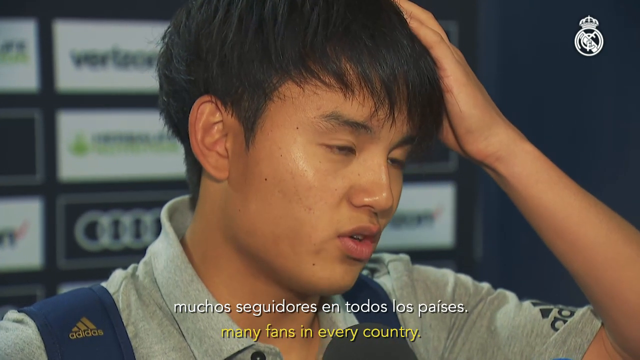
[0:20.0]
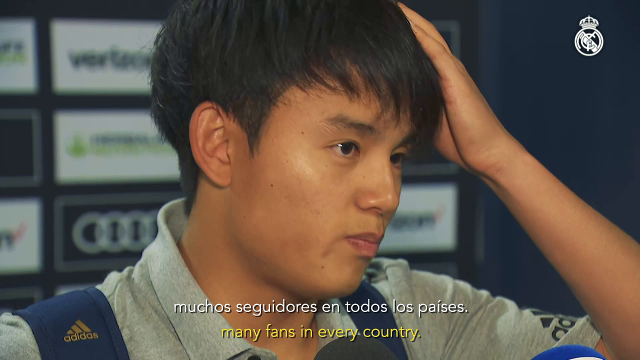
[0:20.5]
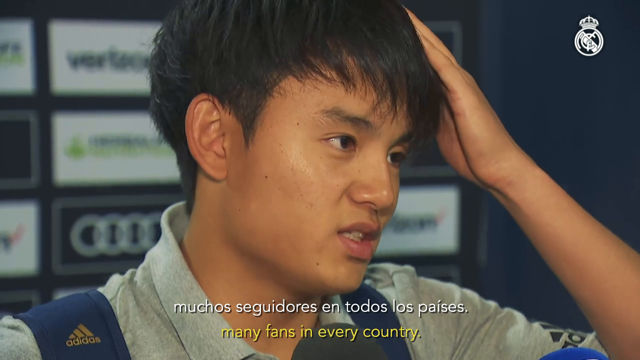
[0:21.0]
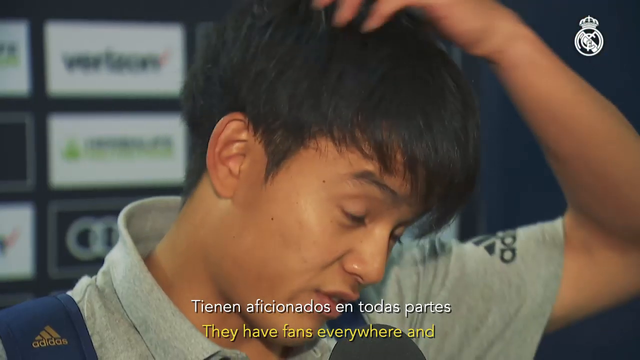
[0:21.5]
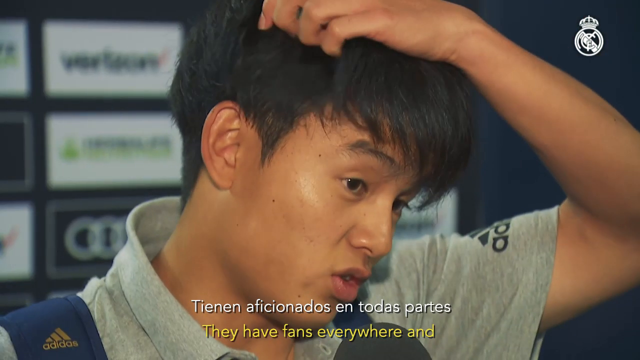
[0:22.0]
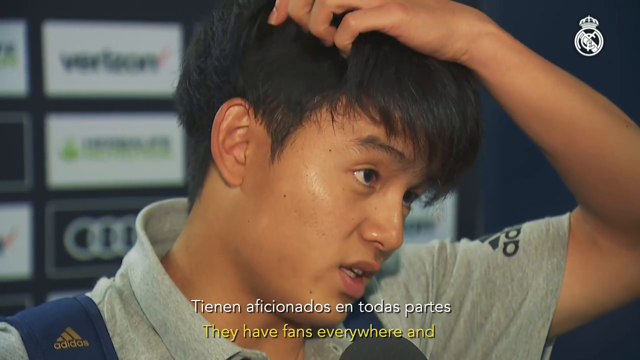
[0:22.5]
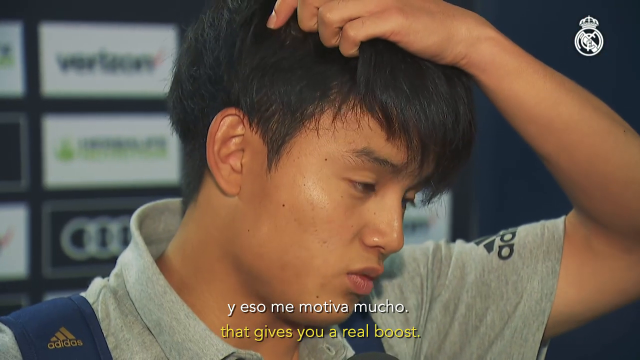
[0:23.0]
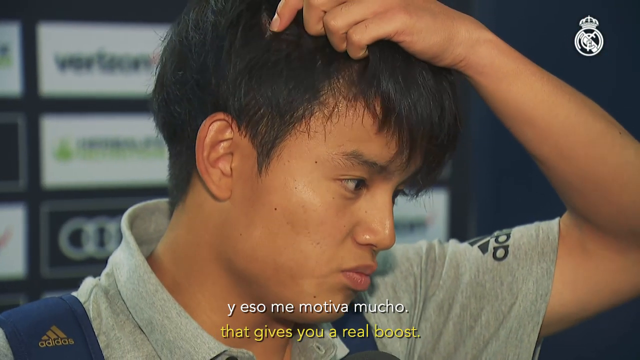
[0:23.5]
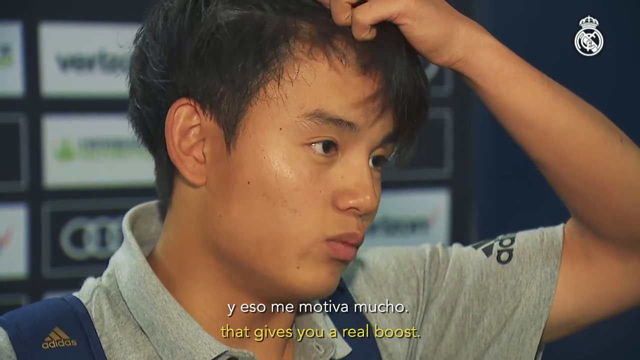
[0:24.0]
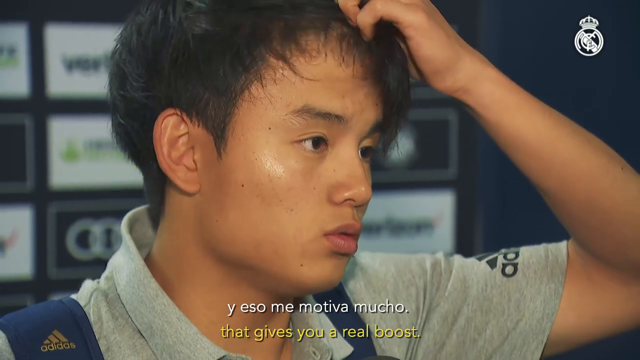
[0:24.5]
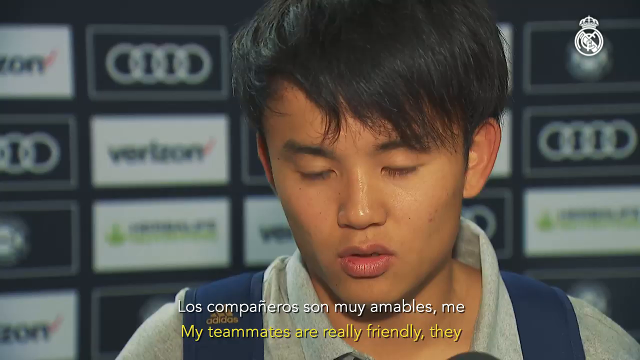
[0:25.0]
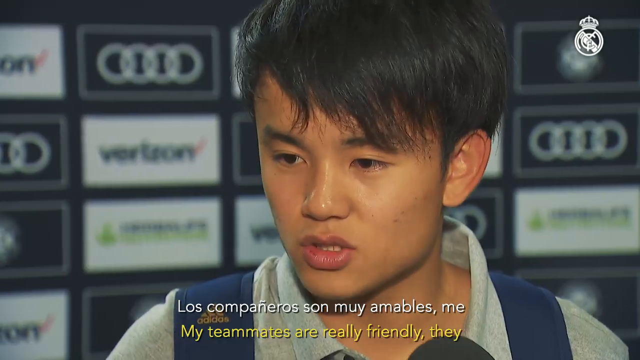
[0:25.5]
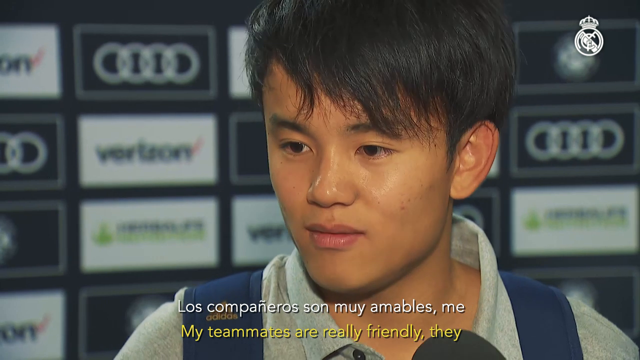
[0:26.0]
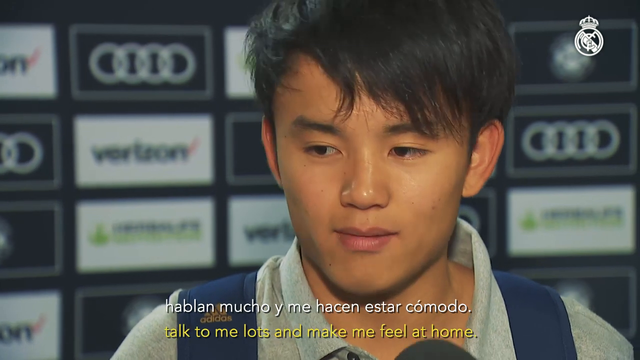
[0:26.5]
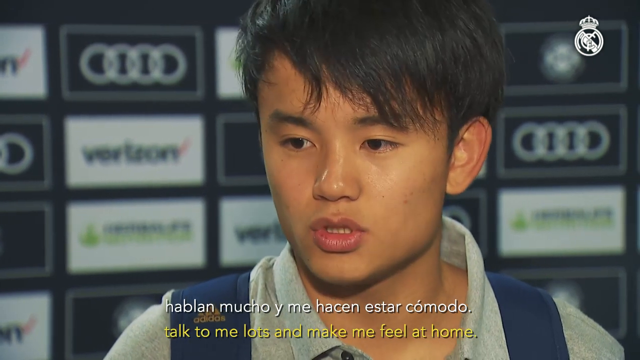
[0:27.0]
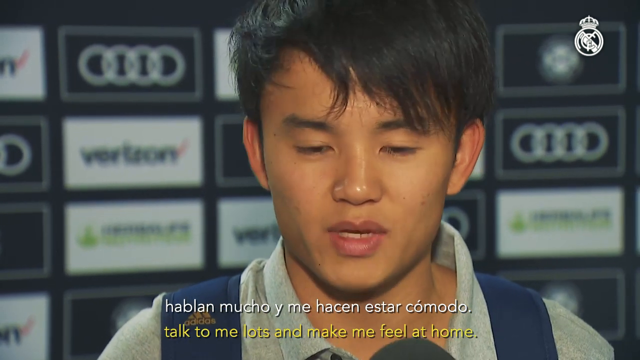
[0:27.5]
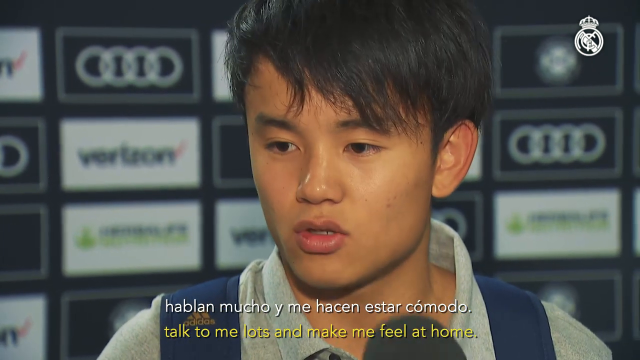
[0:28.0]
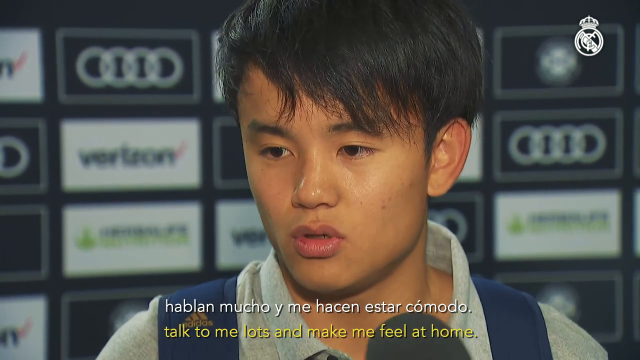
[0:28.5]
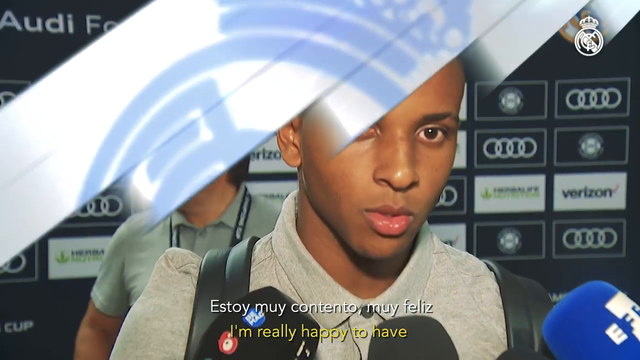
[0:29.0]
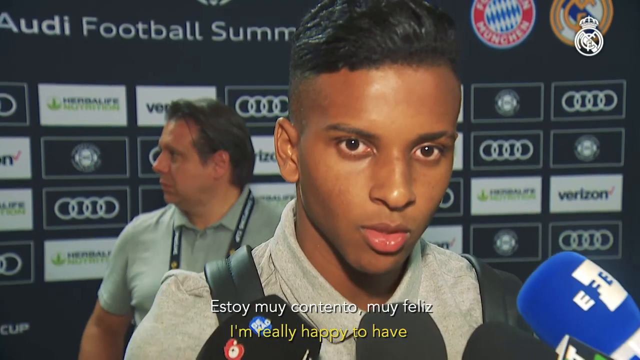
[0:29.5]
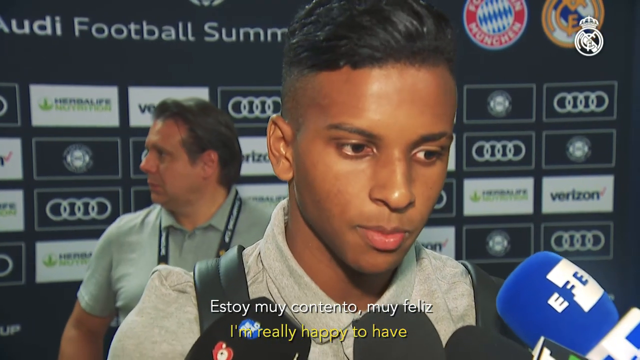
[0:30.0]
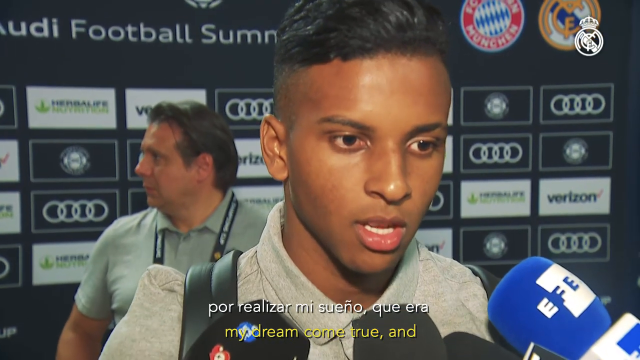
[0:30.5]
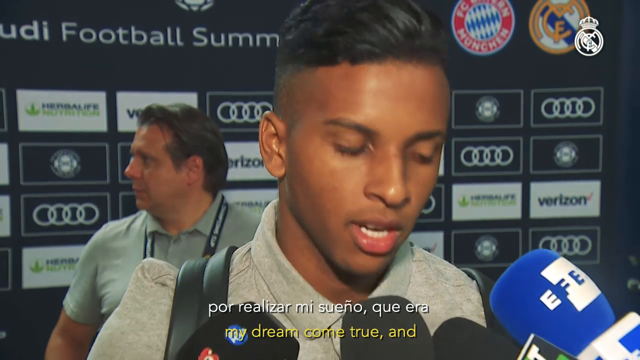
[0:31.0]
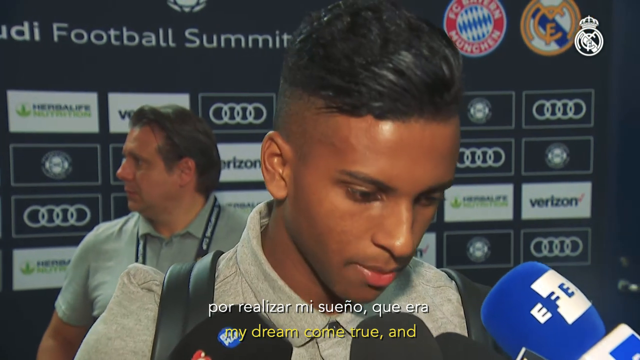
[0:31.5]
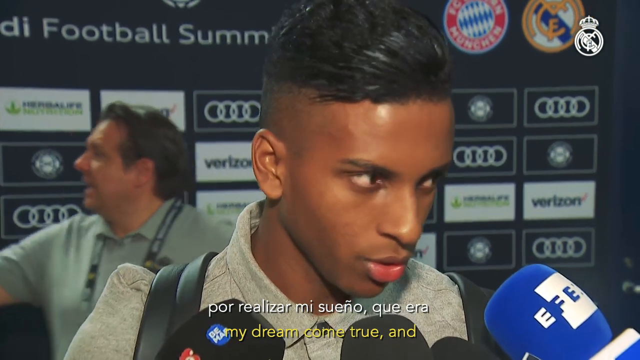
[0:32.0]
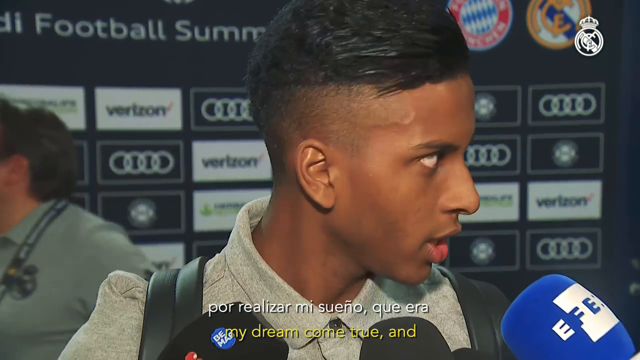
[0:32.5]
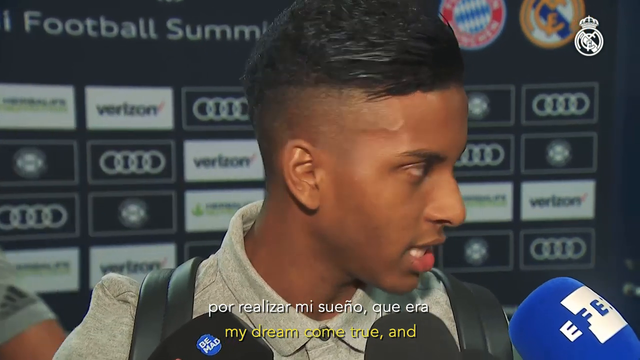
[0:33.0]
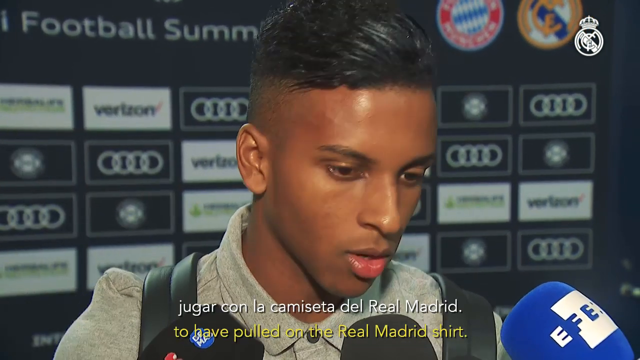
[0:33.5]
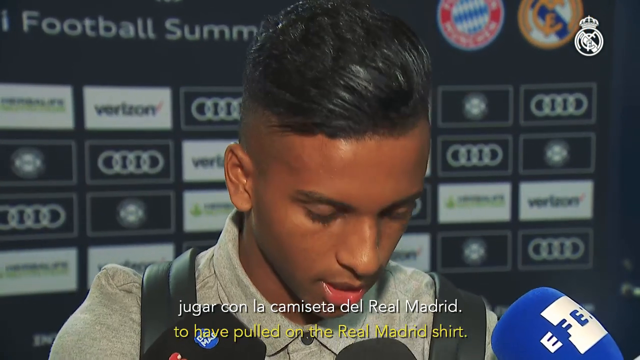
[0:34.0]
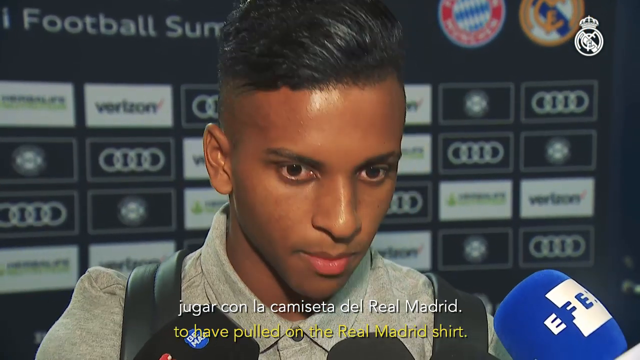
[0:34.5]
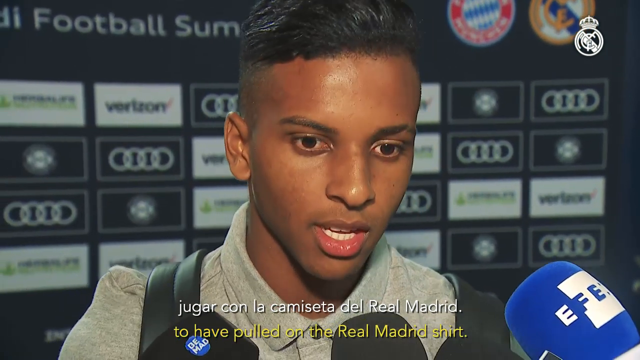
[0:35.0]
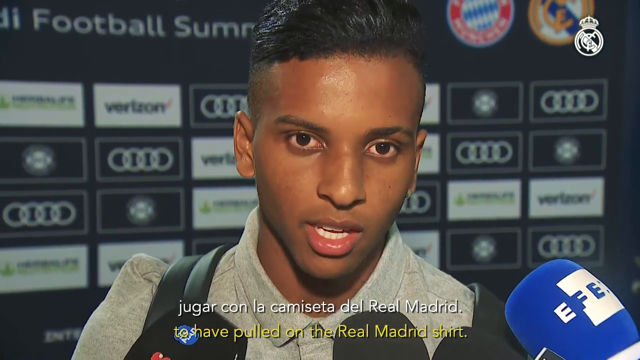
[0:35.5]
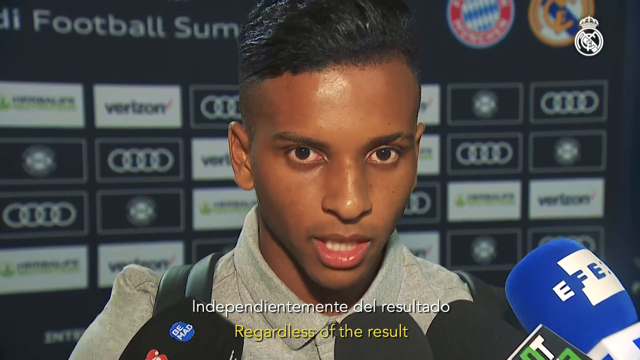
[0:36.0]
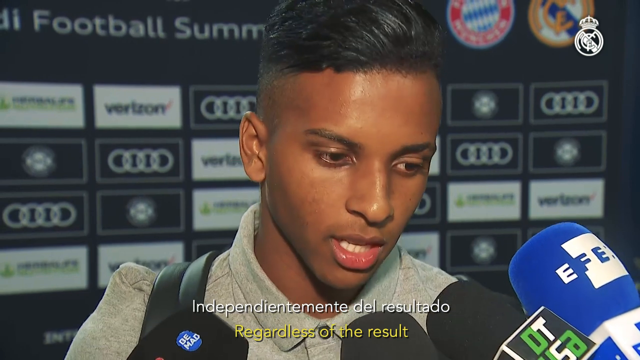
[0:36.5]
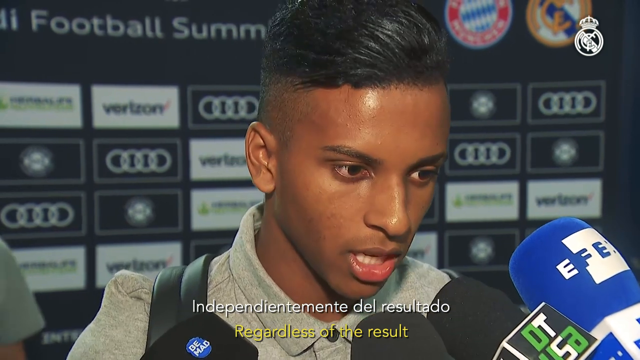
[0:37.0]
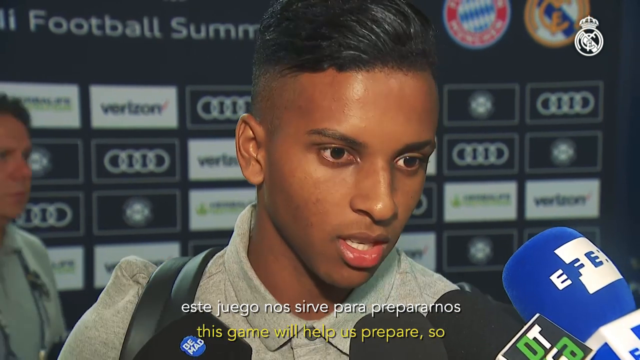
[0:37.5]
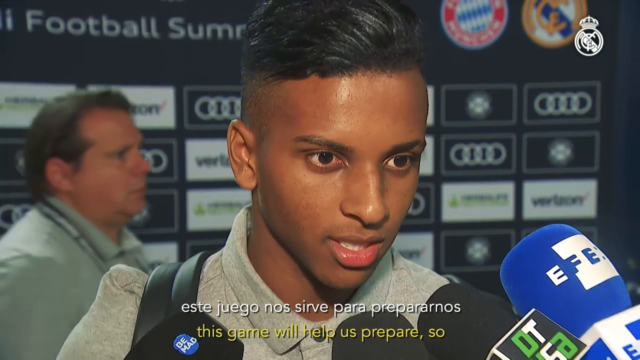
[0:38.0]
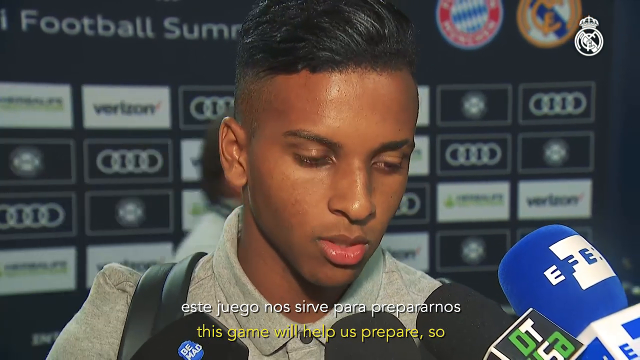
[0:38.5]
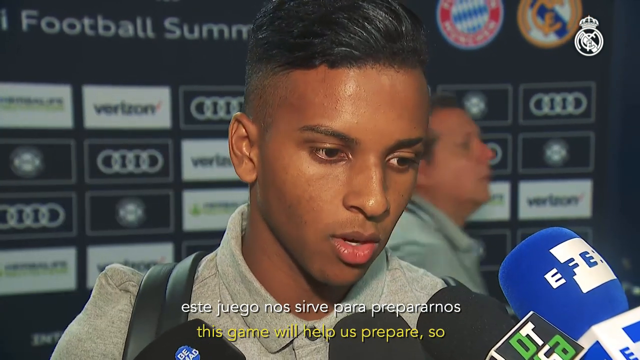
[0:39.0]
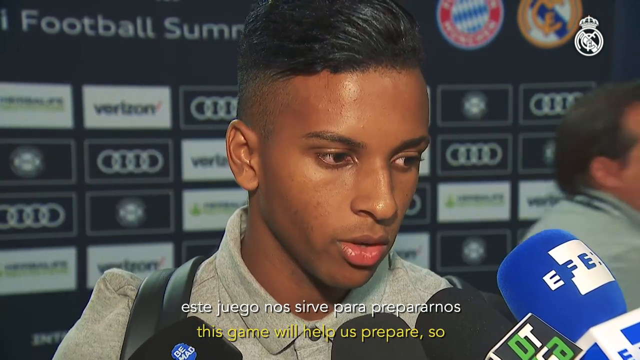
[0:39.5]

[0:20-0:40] The interview with the same Asian man continues. He reaches up and scratches his head, and a little more of him is visible: he wears a gray Adidas shirt, with "Adidas" in black on the sleeve and purple and gold on his right shoulder. The camera angles change as he talks. Then a different person is shown standing in front of the same sponsor wall, where another sponsor, Herbal Life, can be seen. This young man appears to be black, though he might be Indian or Brazilian. He wears a gray collared shirt, with what look like black backpack straps over his shoulders. Microphones are in front of him, most of them black, and one has a big blue sleeve on top. He is being interviewed, speaking to the interviewer just as the previous man did.